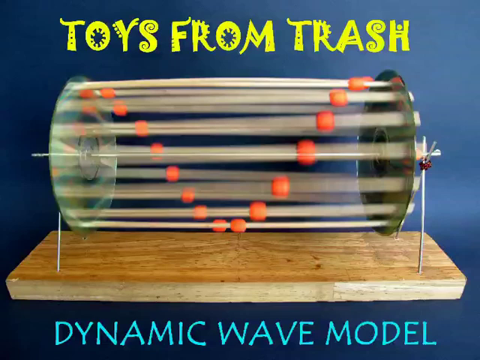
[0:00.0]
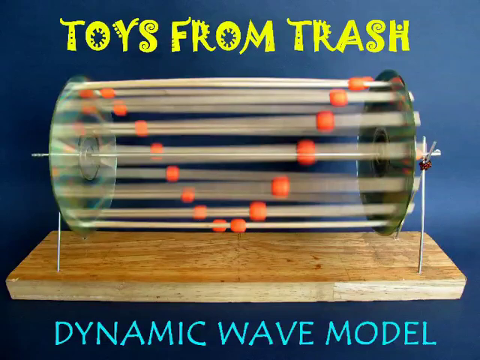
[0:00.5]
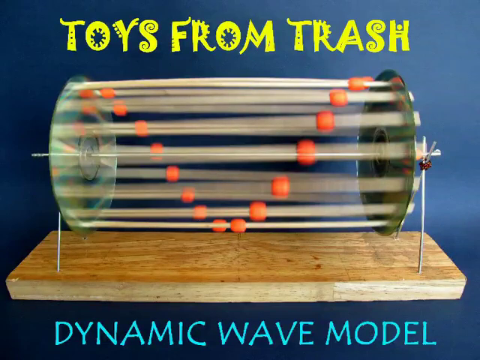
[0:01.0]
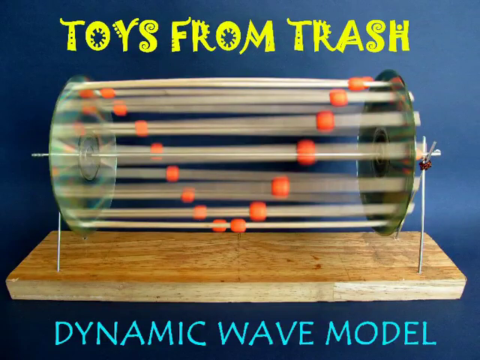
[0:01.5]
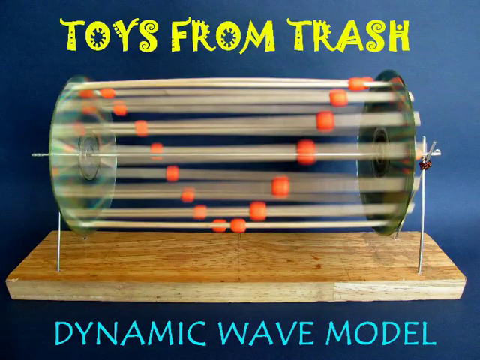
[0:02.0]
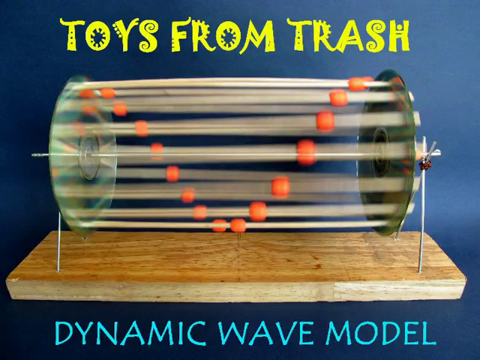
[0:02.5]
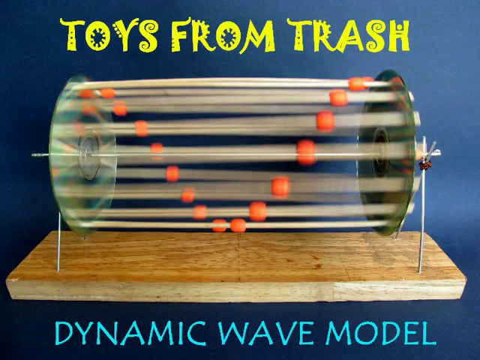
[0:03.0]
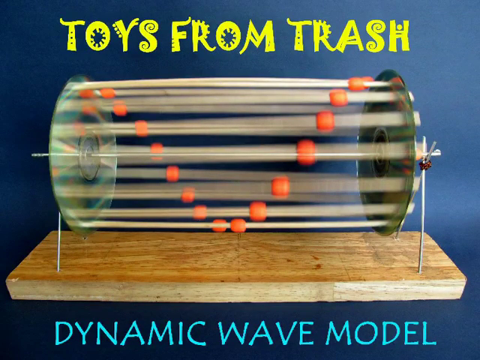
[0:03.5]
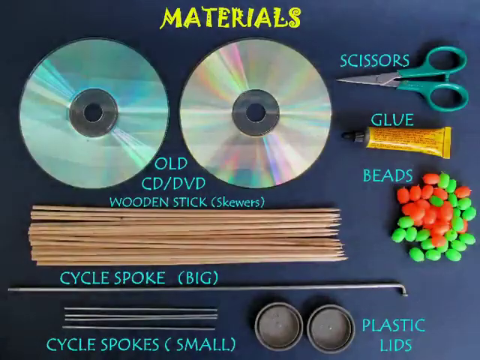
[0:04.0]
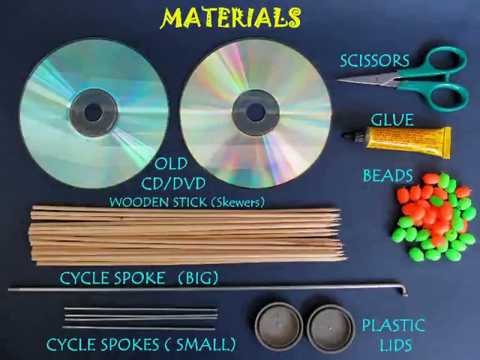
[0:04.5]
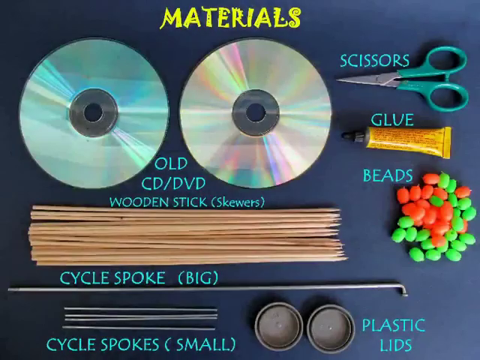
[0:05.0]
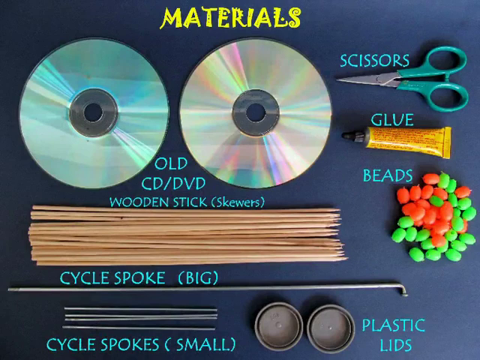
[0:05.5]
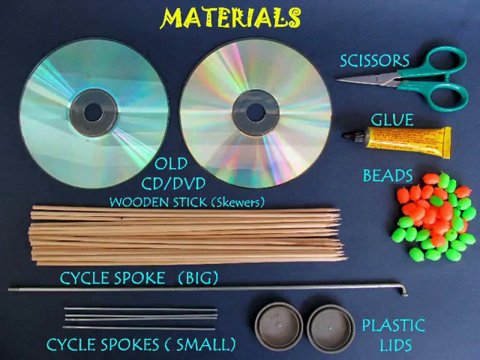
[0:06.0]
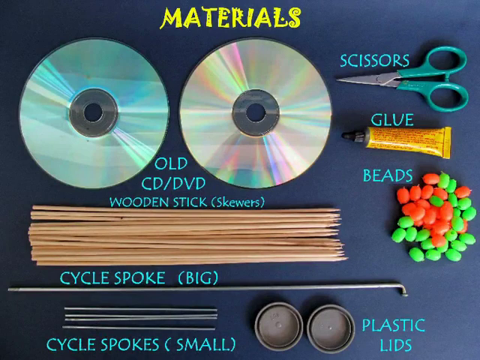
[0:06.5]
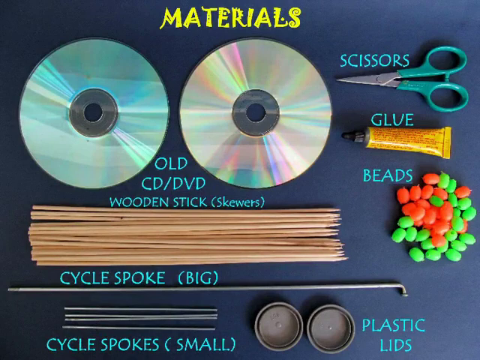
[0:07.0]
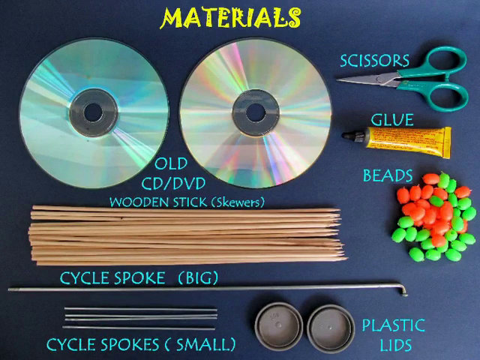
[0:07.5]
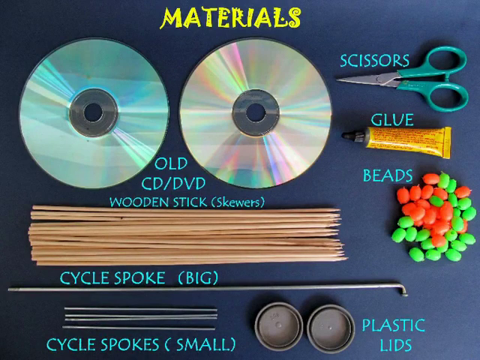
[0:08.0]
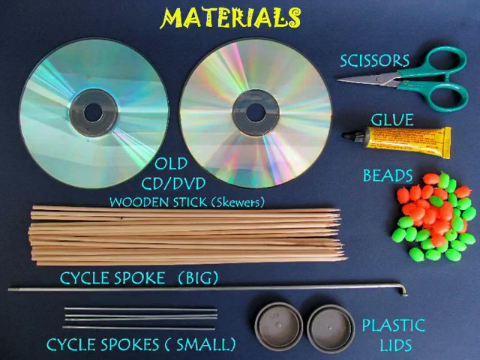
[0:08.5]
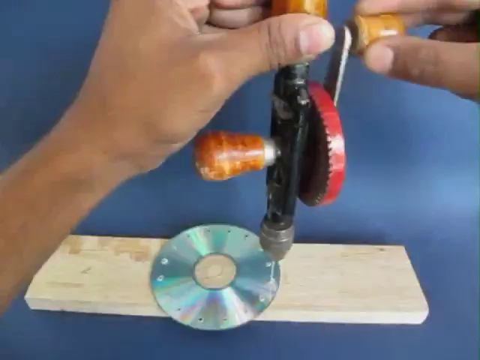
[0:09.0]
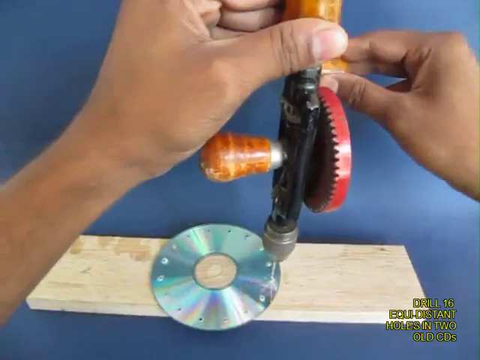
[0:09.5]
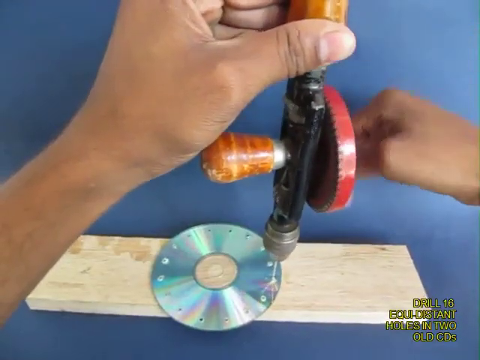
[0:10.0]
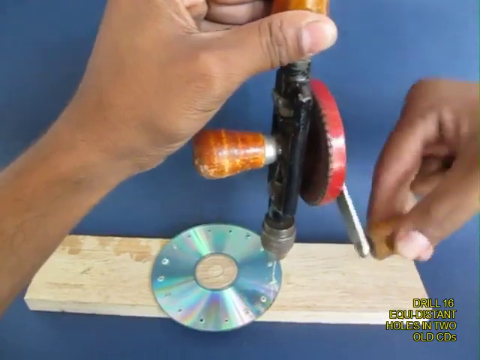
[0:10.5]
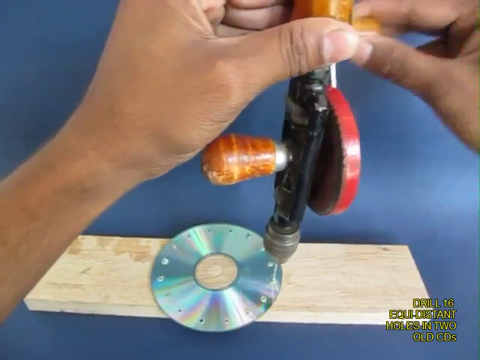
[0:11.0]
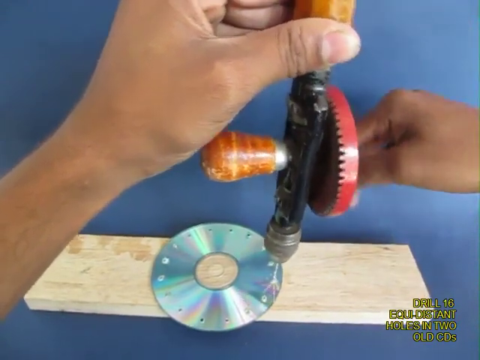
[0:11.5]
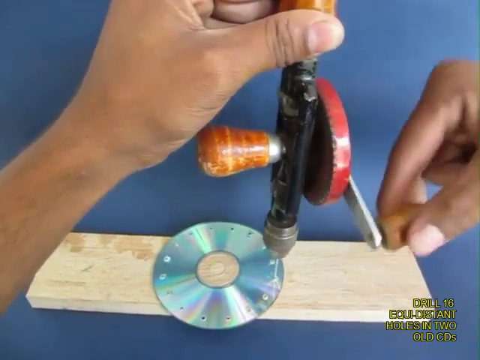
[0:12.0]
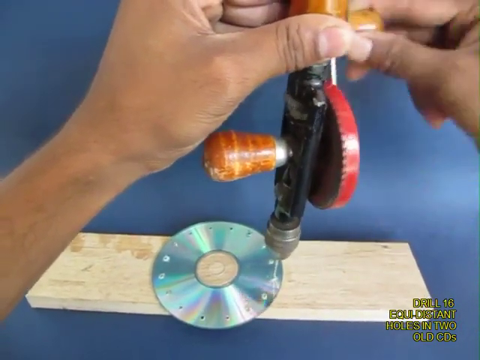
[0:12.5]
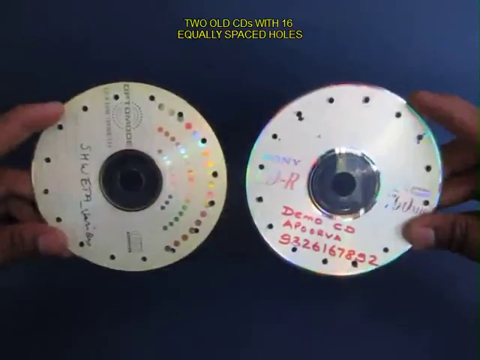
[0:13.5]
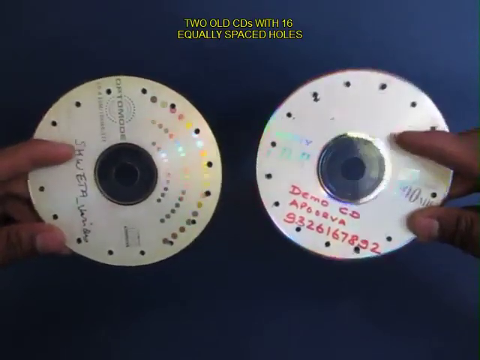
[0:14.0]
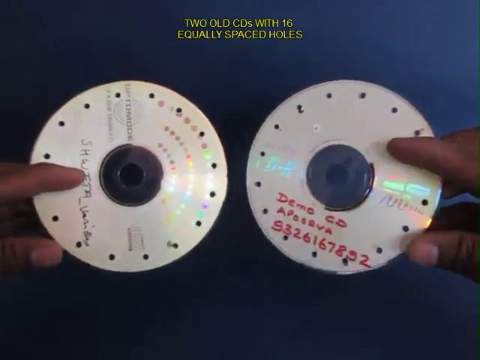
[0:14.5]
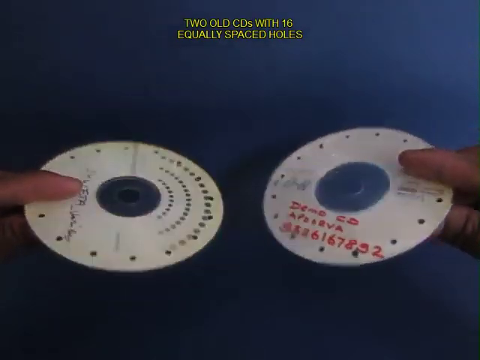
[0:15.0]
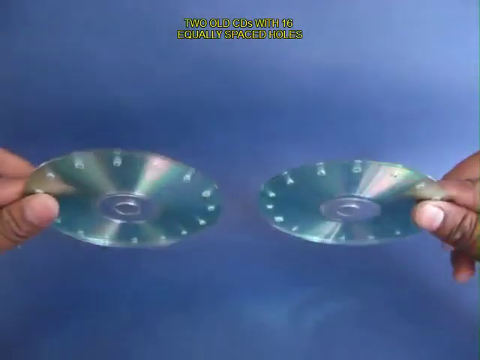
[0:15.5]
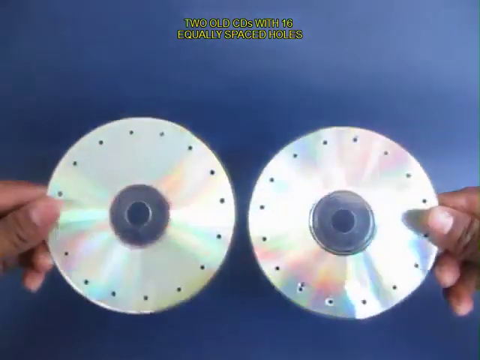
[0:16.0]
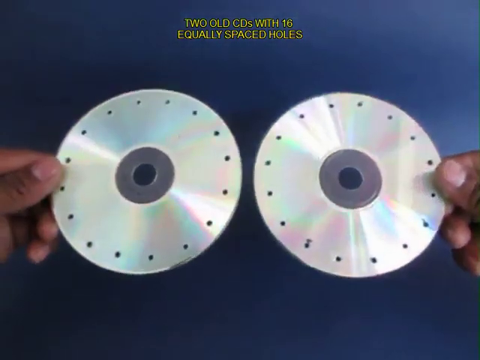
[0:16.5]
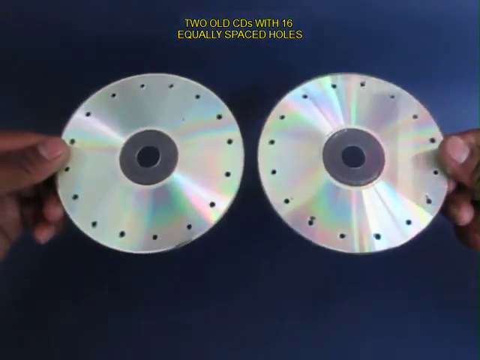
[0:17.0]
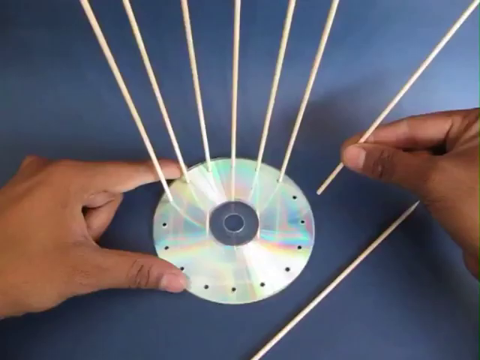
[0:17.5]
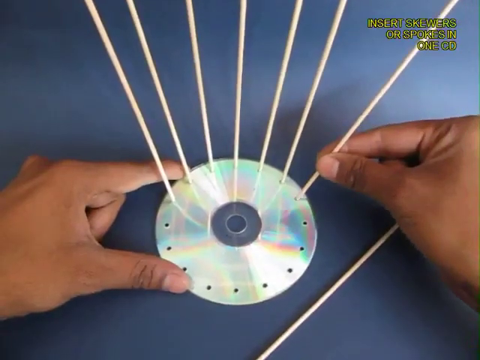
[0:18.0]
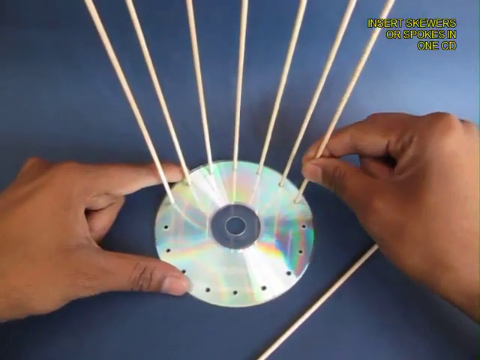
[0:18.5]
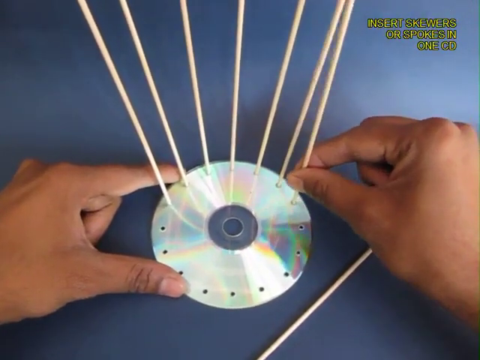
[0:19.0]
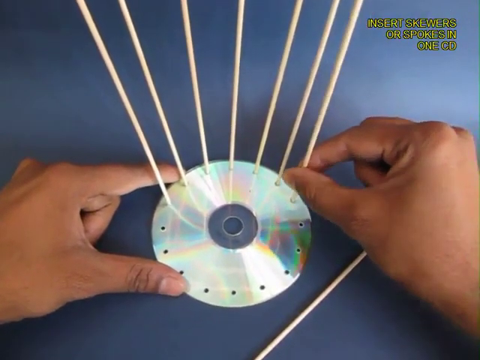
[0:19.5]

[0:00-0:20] Yellow text appears at the top of the screen against a navy blue background, written in a whimsical style that looks like something meant to appeal to children. Below the text is a toy made from what look like CDs, with some kind of rod through them and beads on the skewers; it is on a piece of wood. At the bottom, it is named as a "dynamic wave model". The materials then appear as an overlay on the blue background: two CDs, scissors, wooden sticks, a rod, beads, glue, and plastic. Two hands start making the item, using a tool to carve holes into the CDs. The CDs, which have writing on them, are shown with 16 equally spaced holes, and the man turns the CDs around. The skewers then enter the CDs.